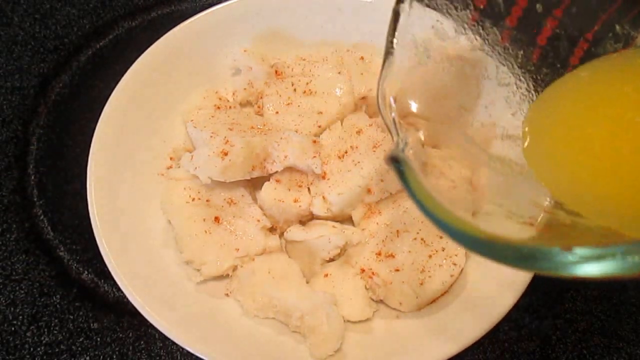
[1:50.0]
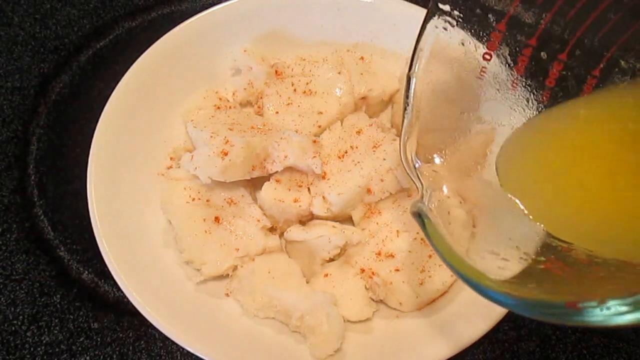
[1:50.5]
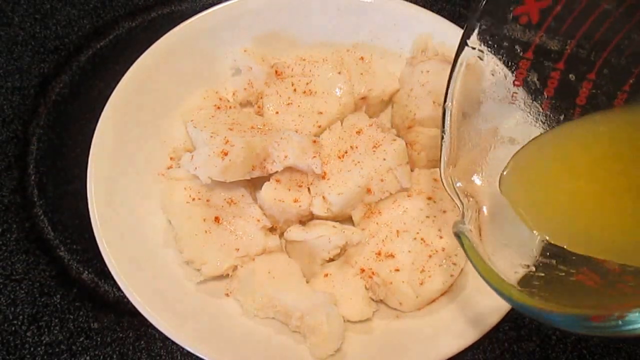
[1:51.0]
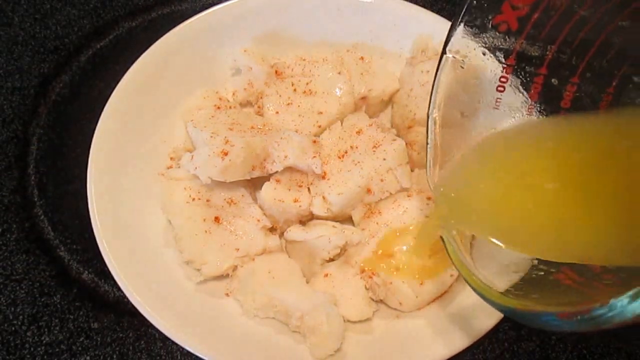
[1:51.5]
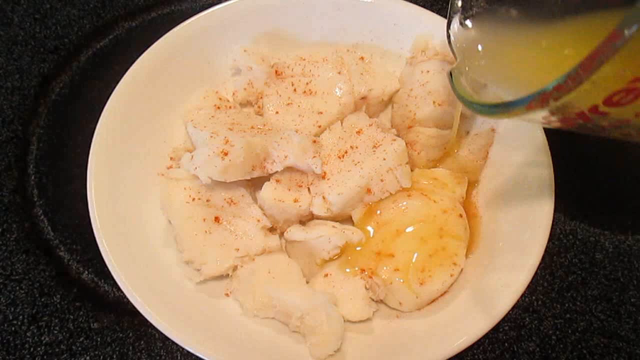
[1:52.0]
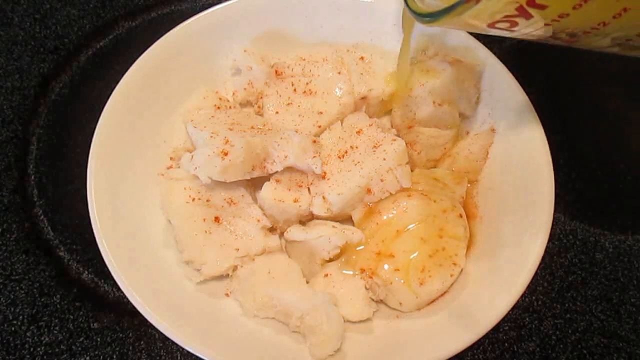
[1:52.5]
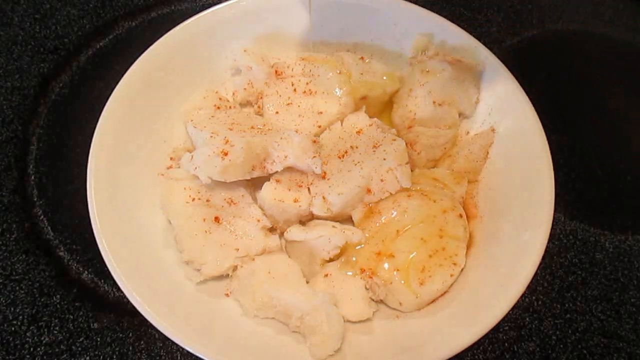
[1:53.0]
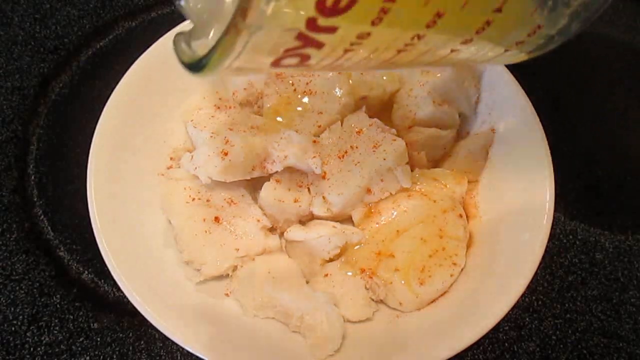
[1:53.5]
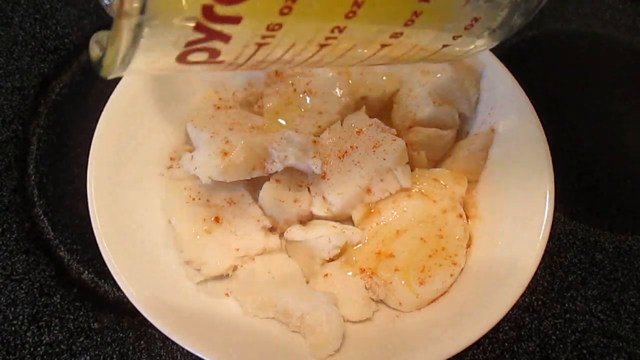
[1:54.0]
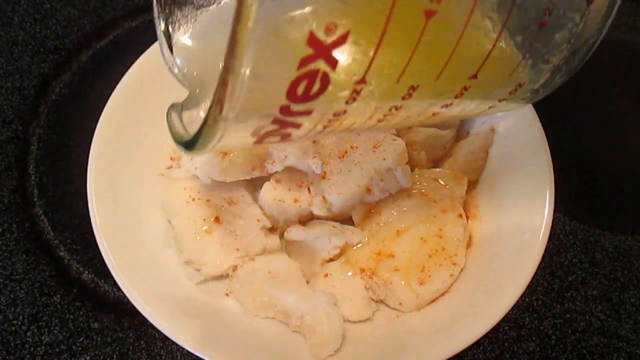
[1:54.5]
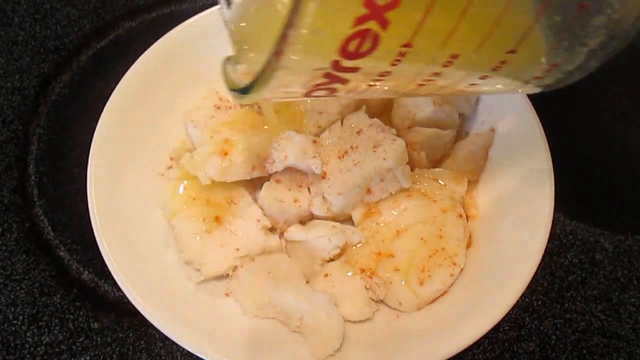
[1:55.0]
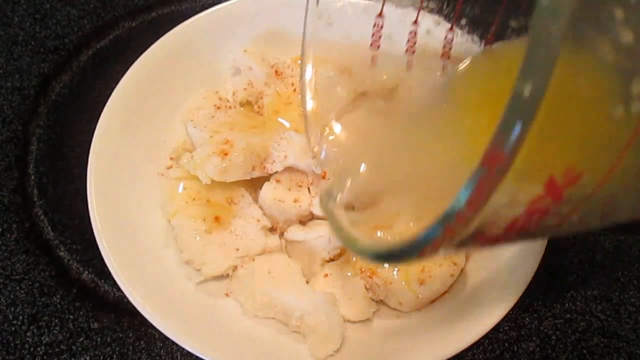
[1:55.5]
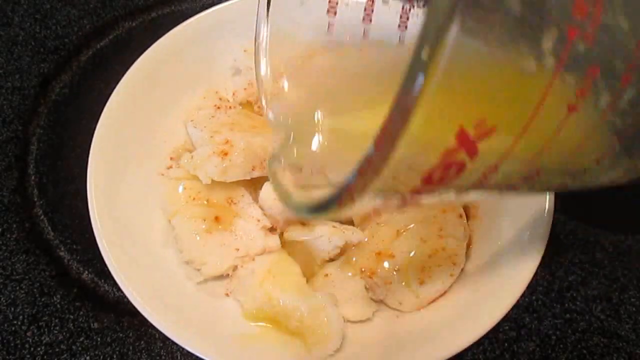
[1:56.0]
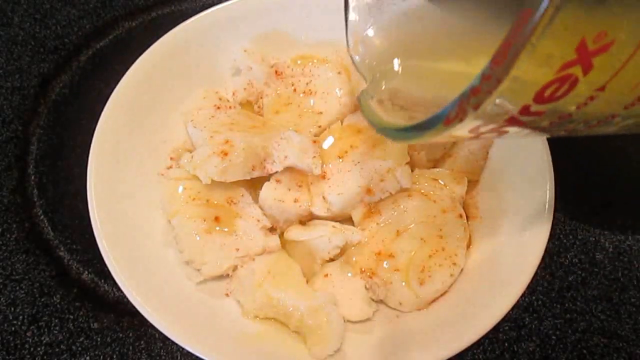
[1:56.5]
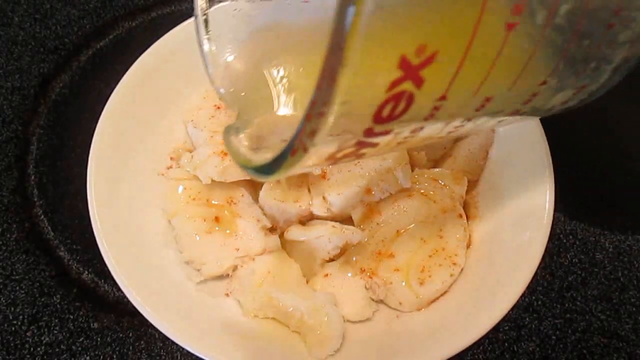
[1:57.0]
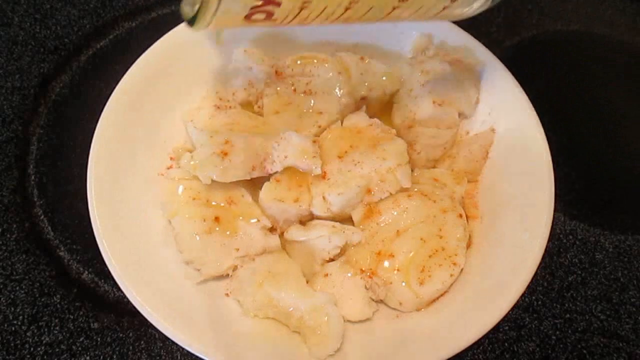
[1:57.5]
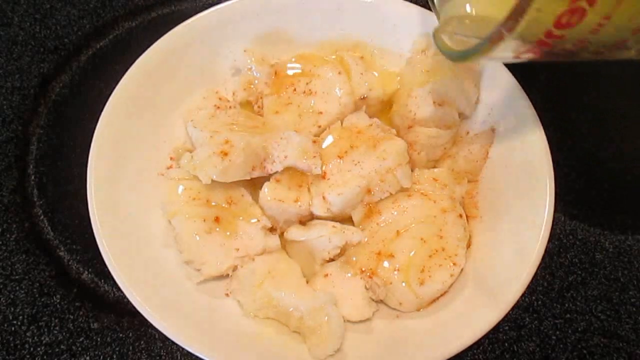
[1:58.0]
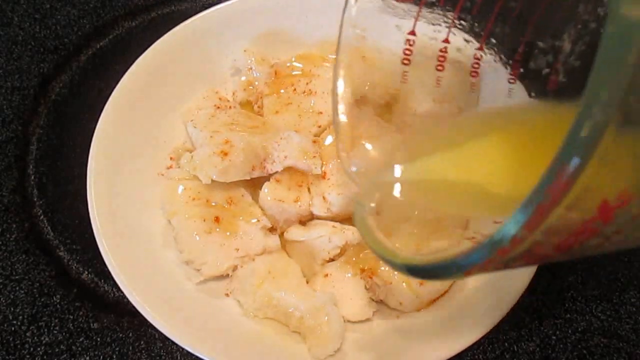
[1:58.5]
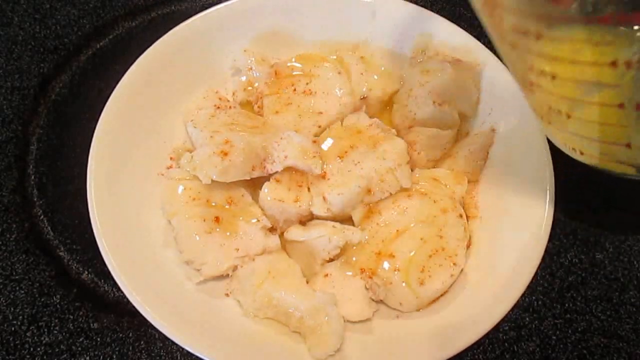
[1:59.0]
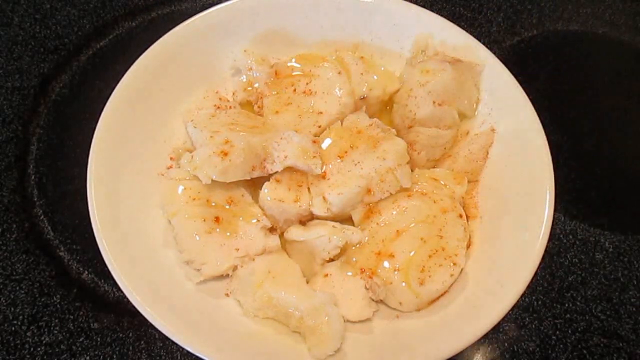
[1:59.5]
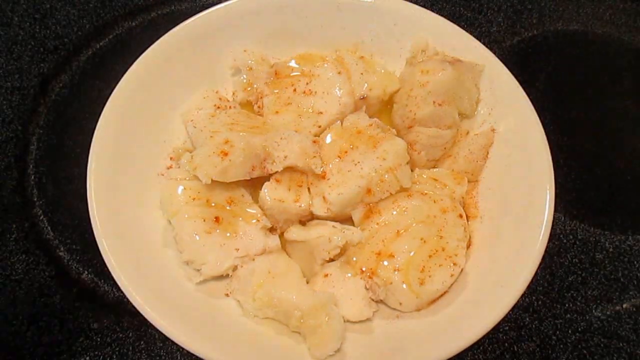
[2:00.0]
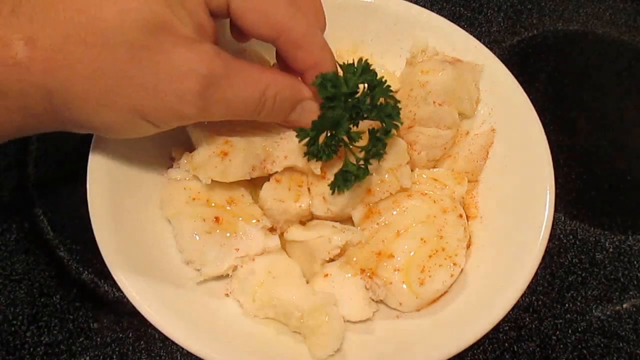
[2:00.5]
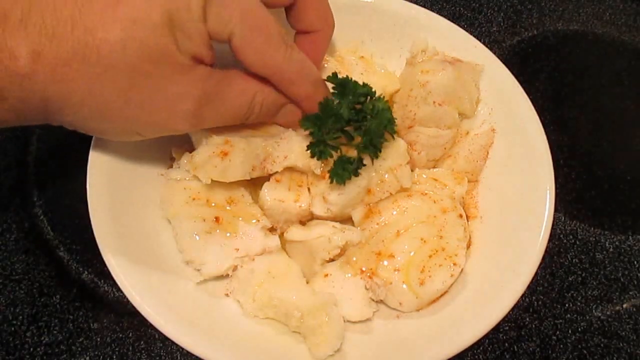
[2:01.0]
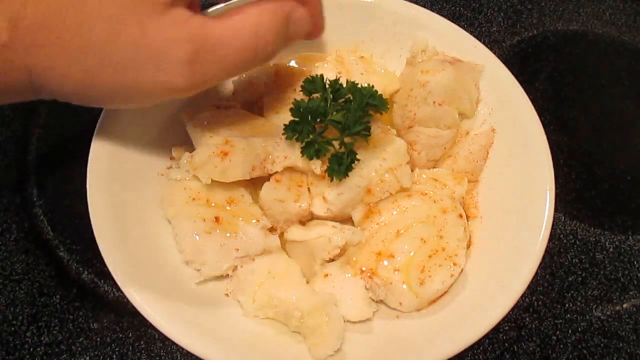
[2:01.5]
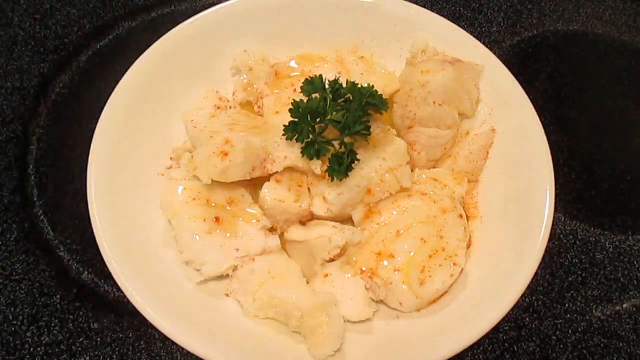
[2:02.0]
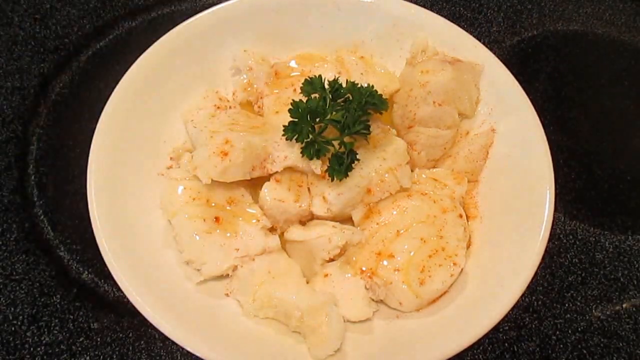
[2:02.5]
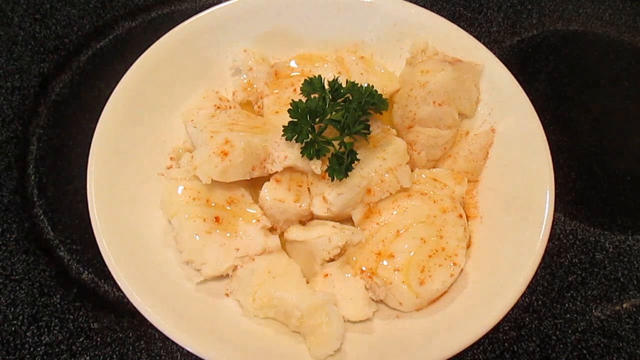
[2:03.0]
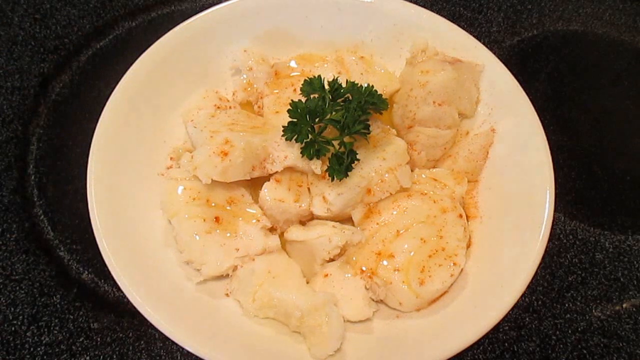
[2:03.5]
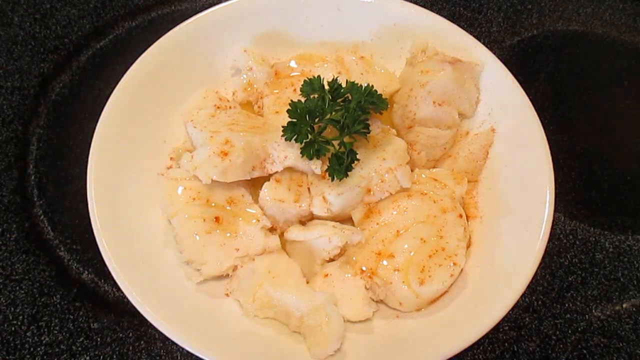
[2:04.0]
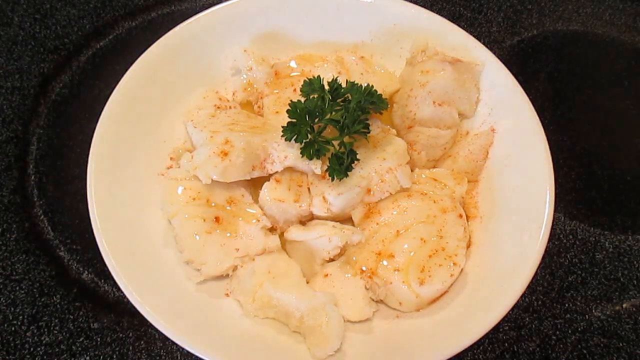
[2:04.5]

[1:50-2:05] The plate holds all of the fish with paprika sprinkled across the top. A glass Pyrex measuring cup with red "Pyrex" writing and measuring labels is shown; it looks like maybe a two-cup measuring cup, and the butter in it looks like maybe a quarter to half a cup. Not all of the butter is poured; maybe about half of the melted butter goes over the fish. The cook's left hand places a piece of fresh parsley on top of the fish and uses the index finger to press it down between the pieces. The plate appears to be on a flat black electric cooktop, in the middle of two black eyes, a larger one and a smaller one, which do not appear to be hot.